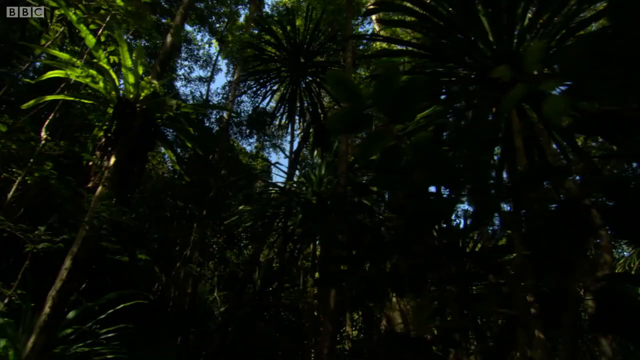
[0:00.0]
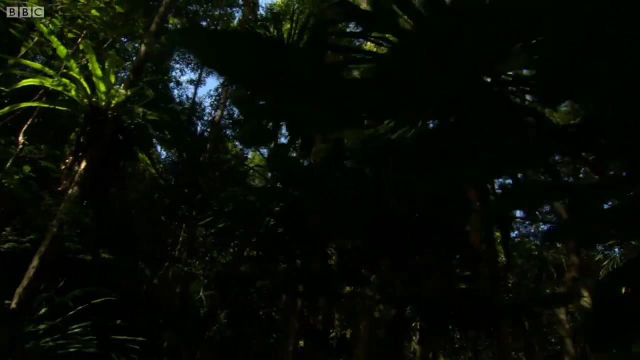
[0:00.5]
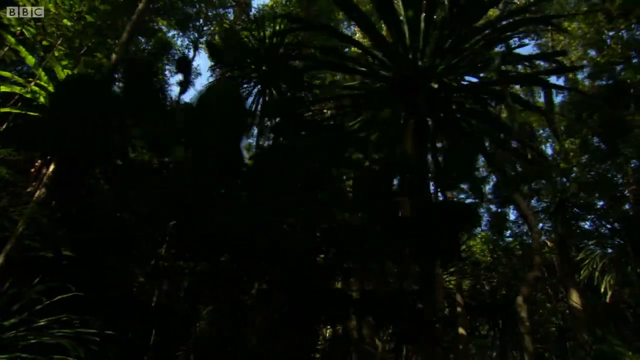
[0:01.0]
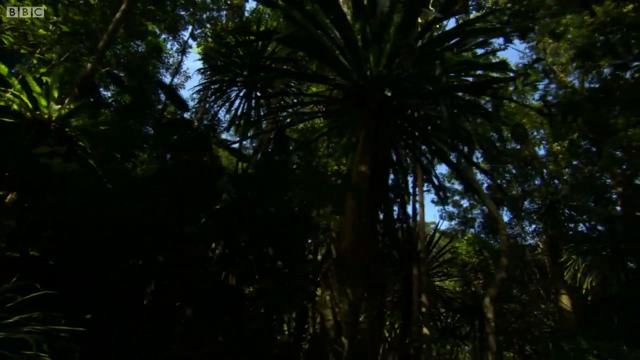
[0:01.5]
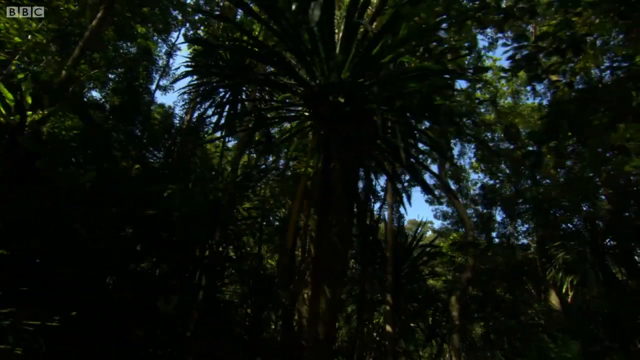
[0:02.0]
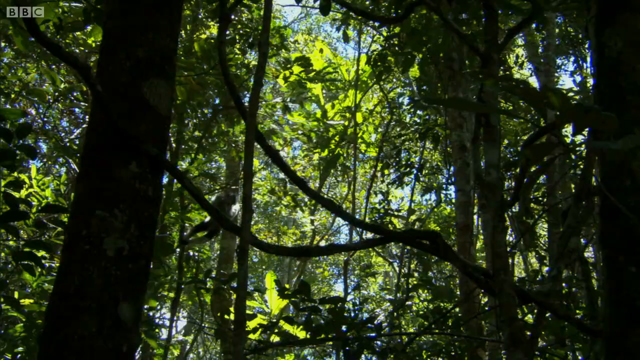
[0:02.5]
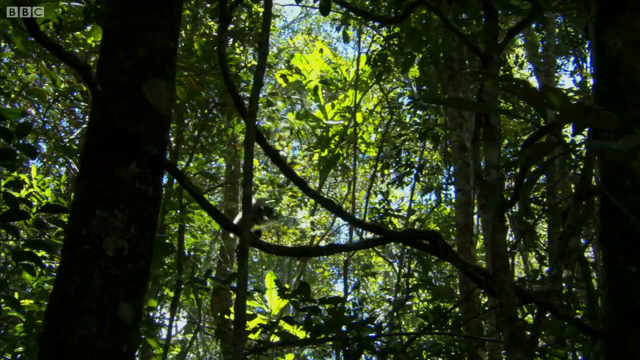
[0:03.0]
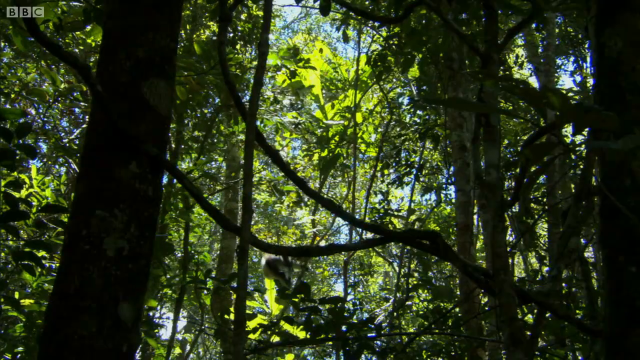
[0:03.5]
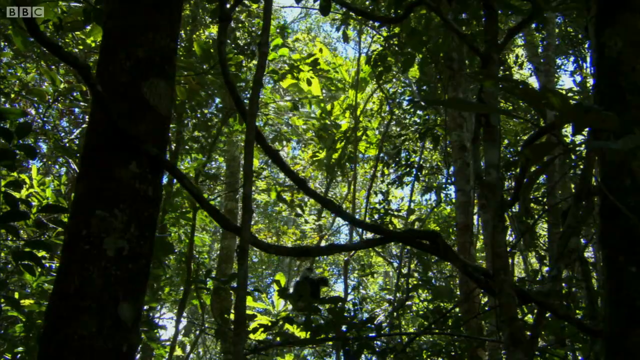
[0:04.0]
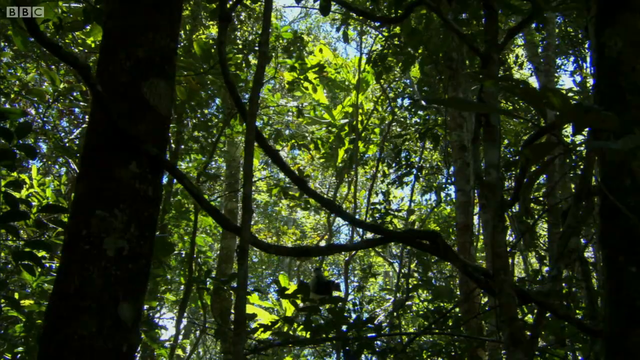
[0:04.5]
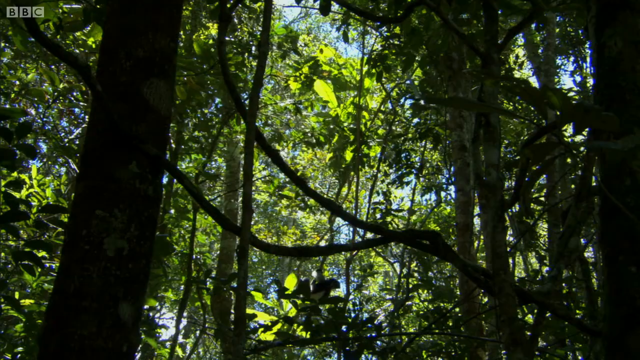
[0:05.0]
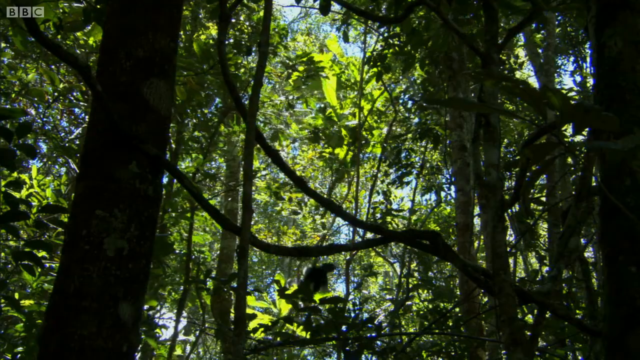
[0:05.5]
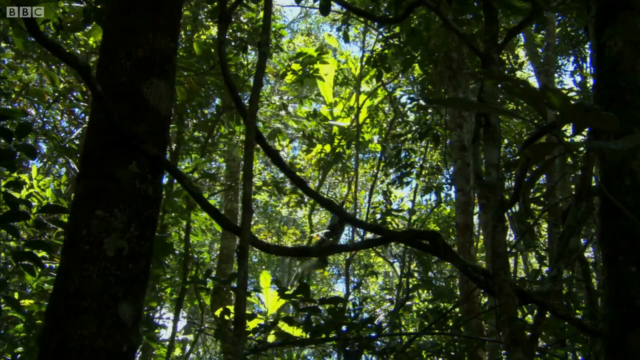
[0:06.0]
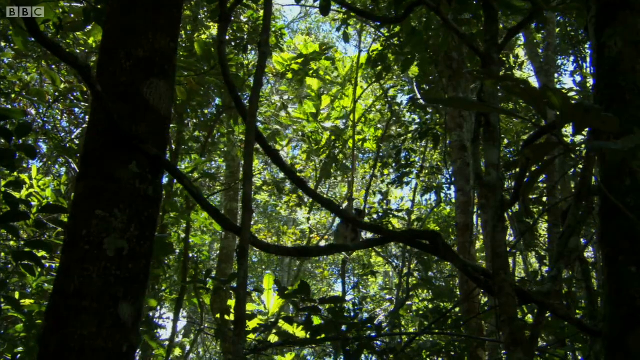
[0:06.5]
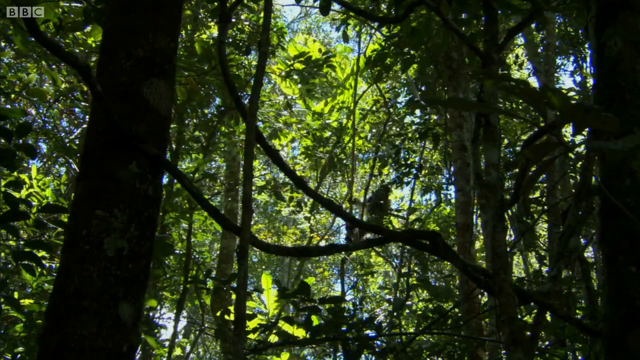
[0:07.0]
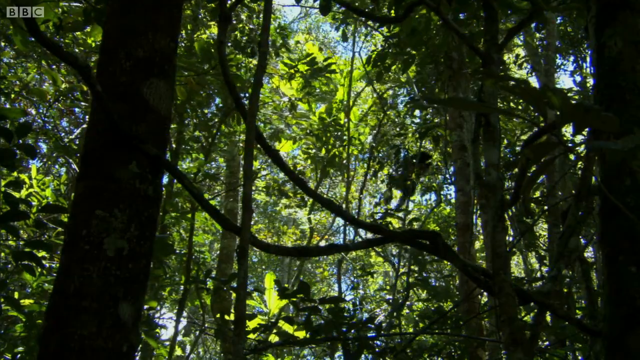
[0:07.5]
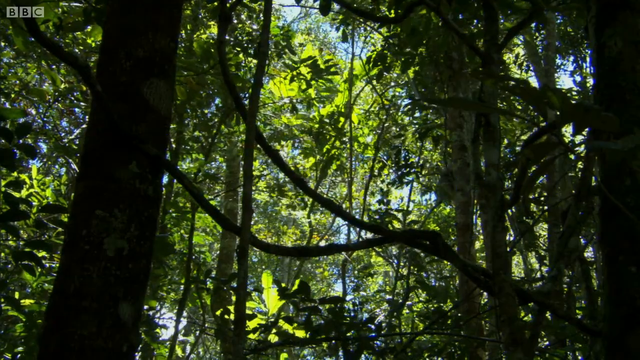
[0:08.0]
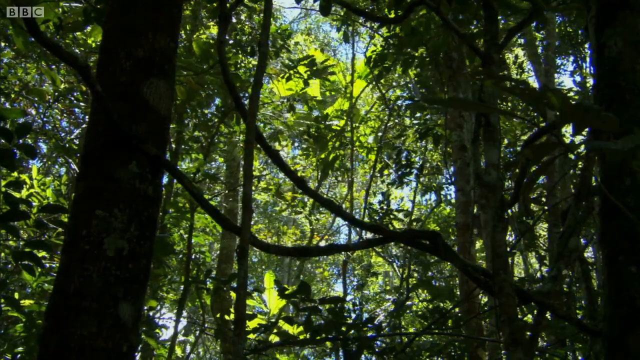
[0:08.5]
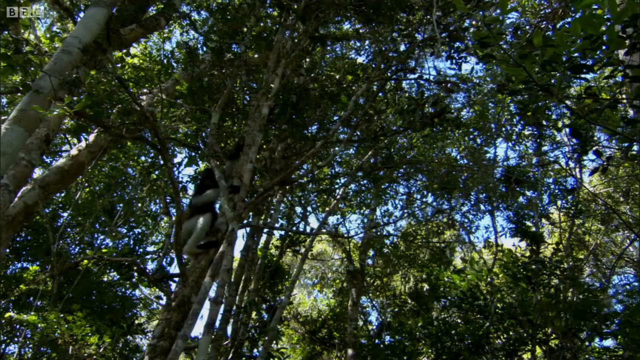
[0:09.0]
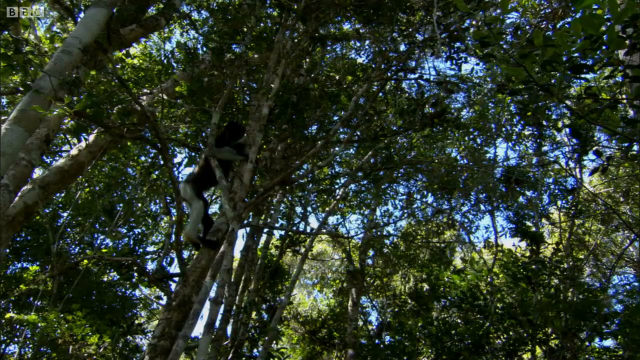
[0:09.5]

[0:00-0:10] A primate, apparently a lemur, travels through a jungle by jumping from one tree to another, grabbing onto vines in between. Sunlight streams through the trees, which move and sway as the lemur grabs their branches. The lemur also climbs one tree by shimmying up its trunk. The camera angle changes a little to follow the lemur's movement but stays fairly close up within the trees, so the full trees are not visible, though a good part of them is.